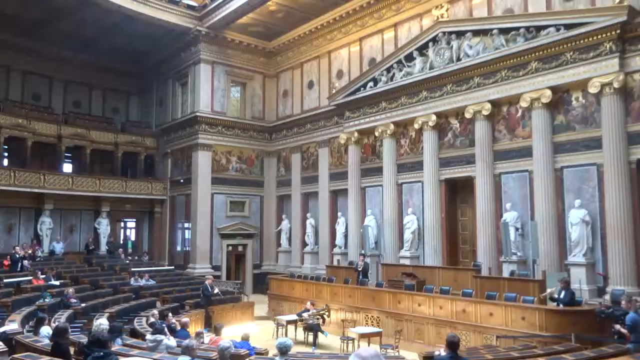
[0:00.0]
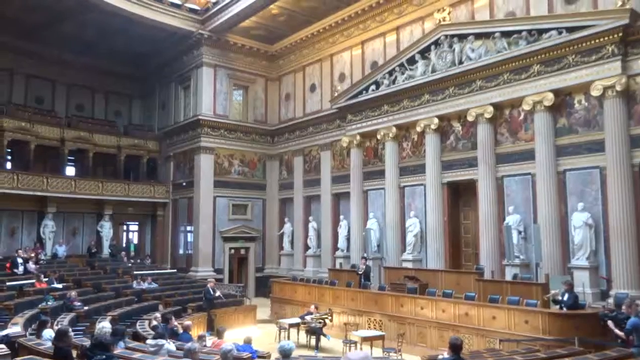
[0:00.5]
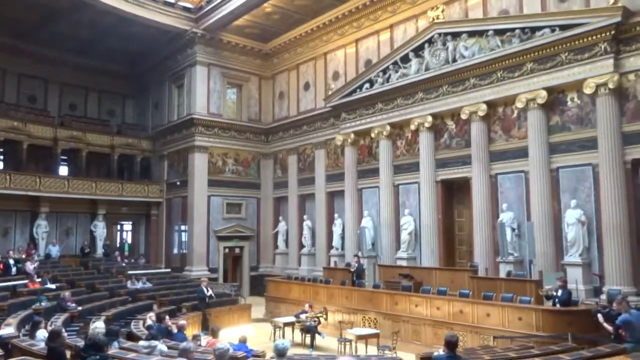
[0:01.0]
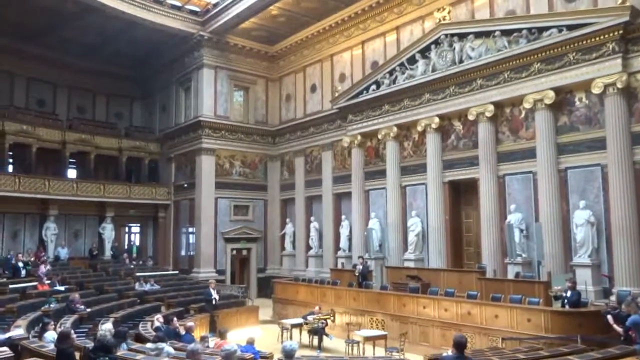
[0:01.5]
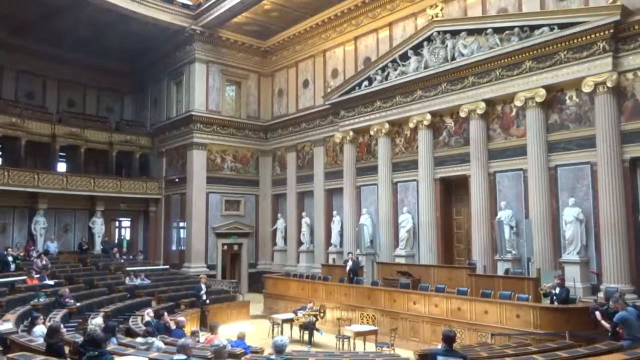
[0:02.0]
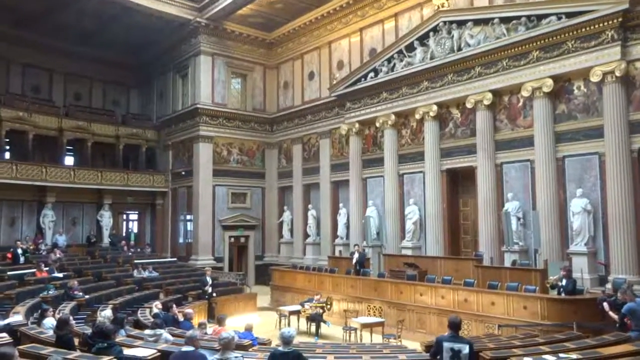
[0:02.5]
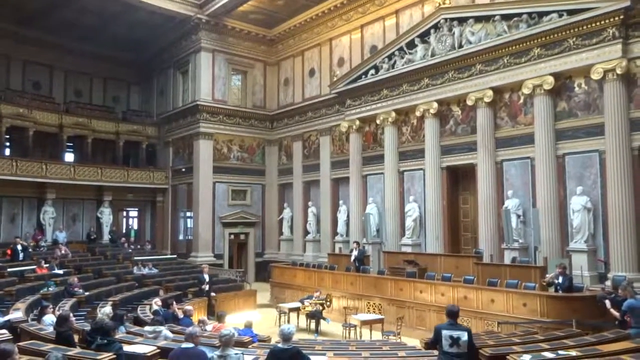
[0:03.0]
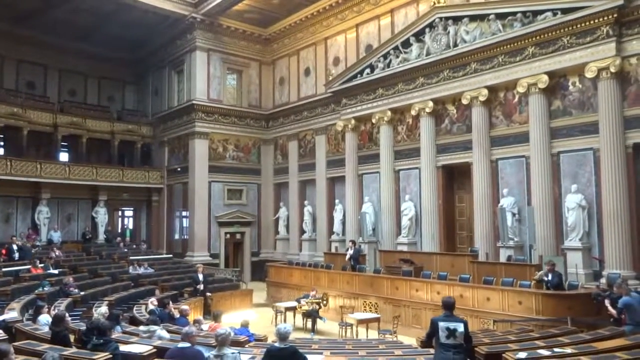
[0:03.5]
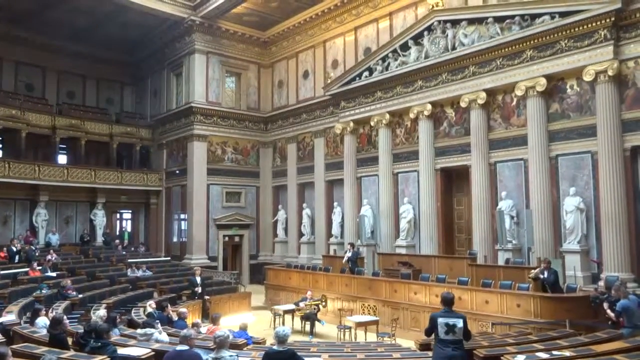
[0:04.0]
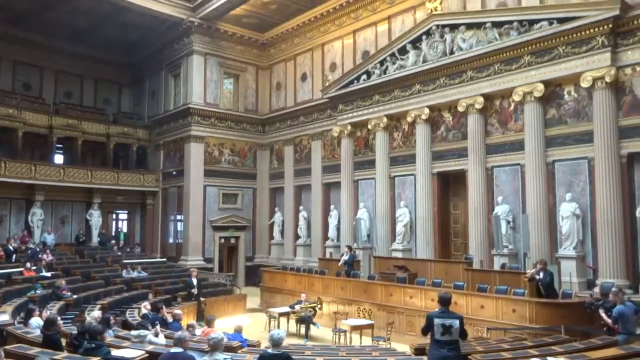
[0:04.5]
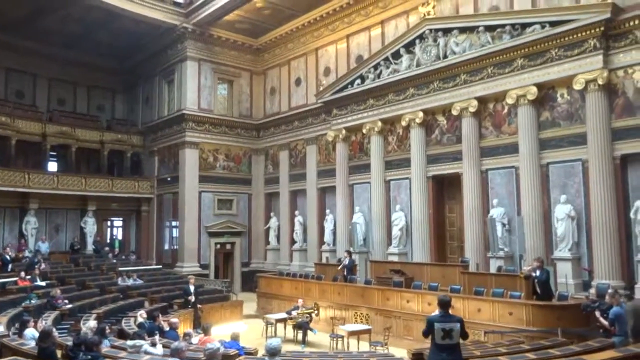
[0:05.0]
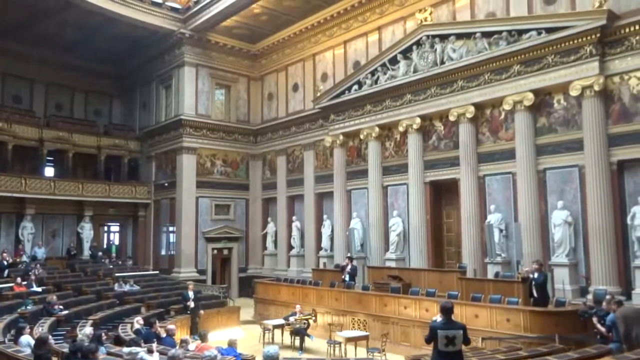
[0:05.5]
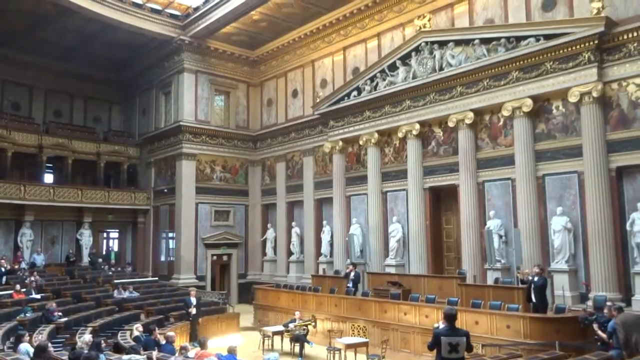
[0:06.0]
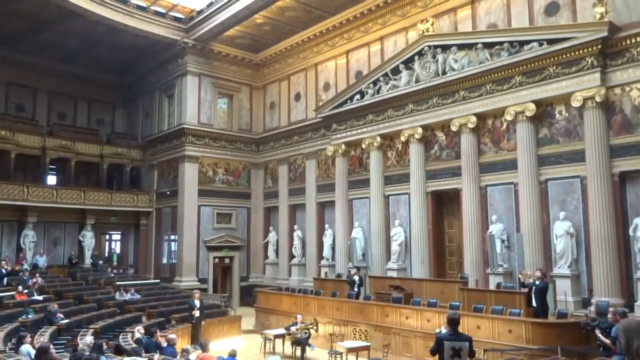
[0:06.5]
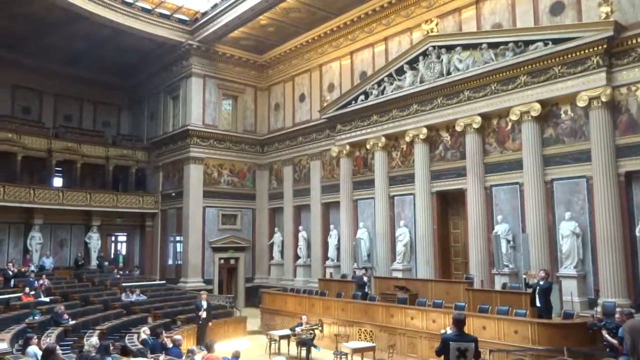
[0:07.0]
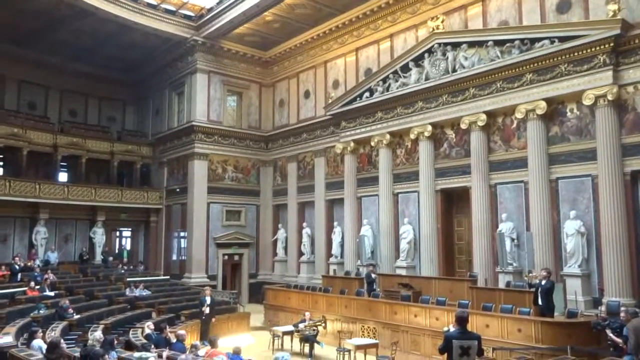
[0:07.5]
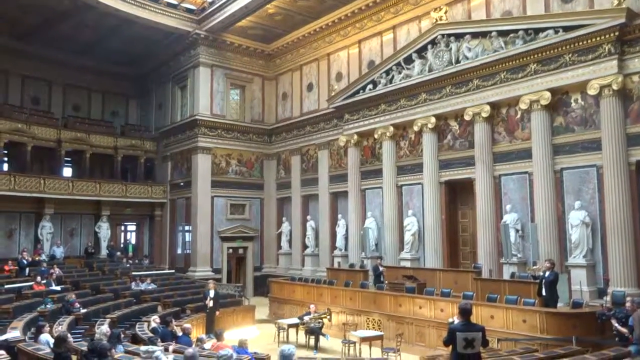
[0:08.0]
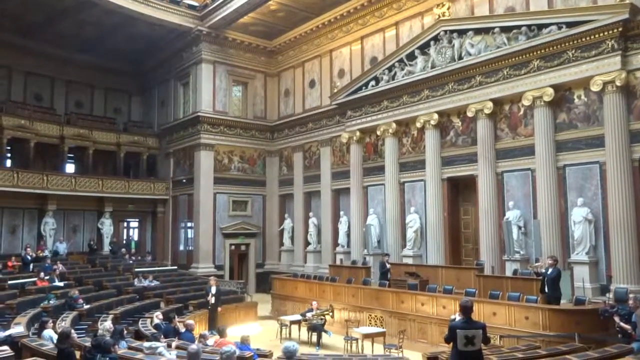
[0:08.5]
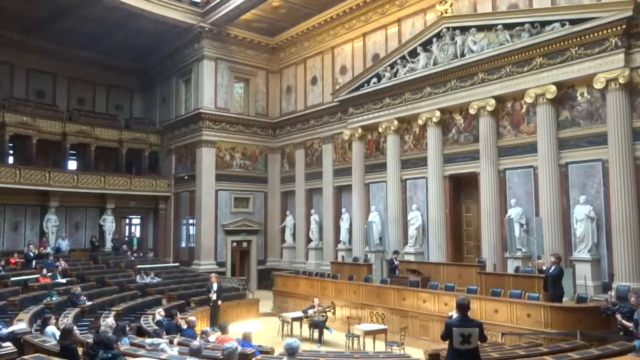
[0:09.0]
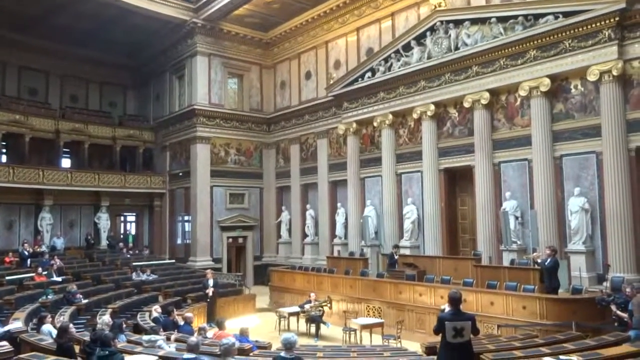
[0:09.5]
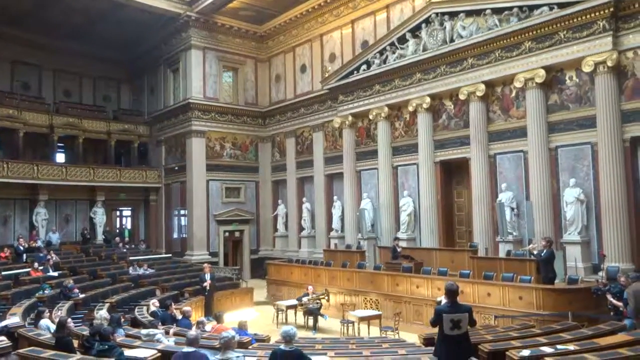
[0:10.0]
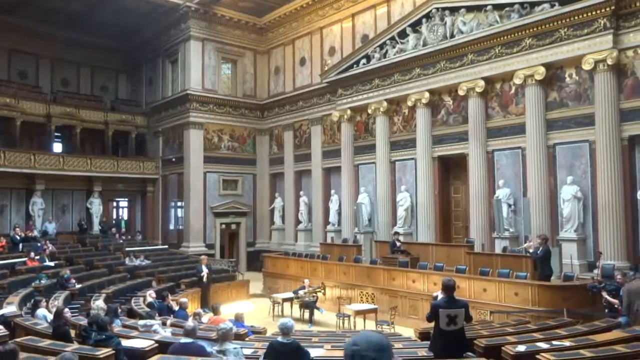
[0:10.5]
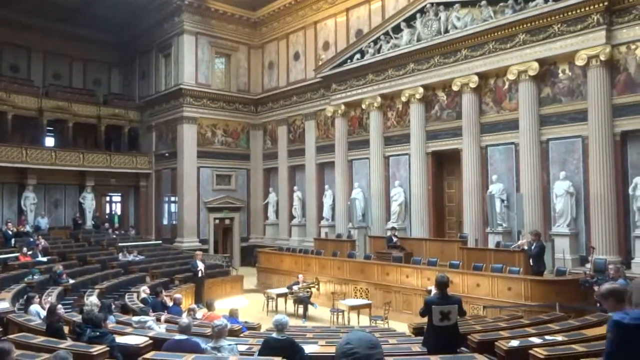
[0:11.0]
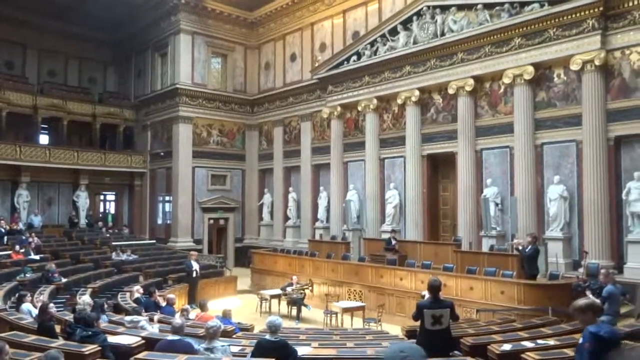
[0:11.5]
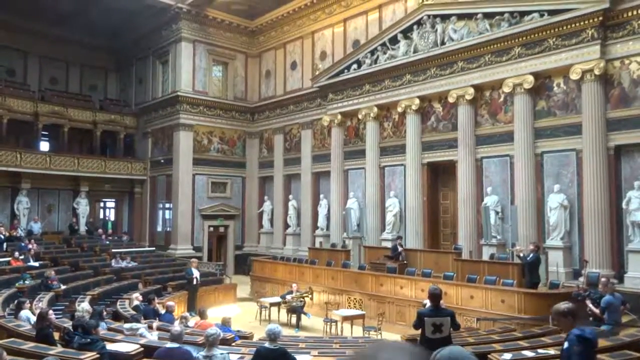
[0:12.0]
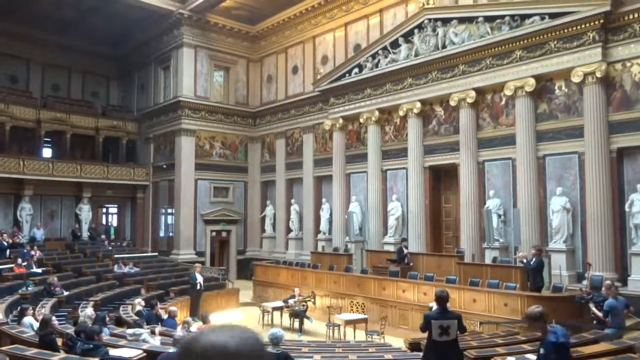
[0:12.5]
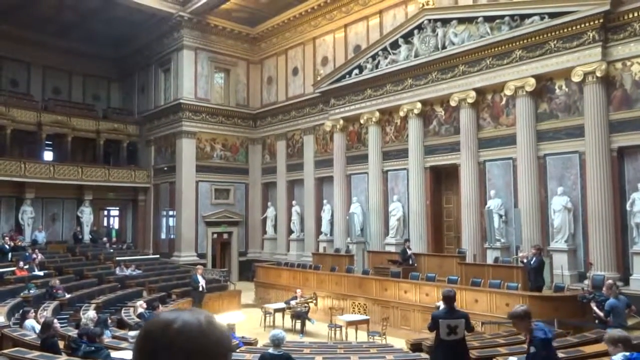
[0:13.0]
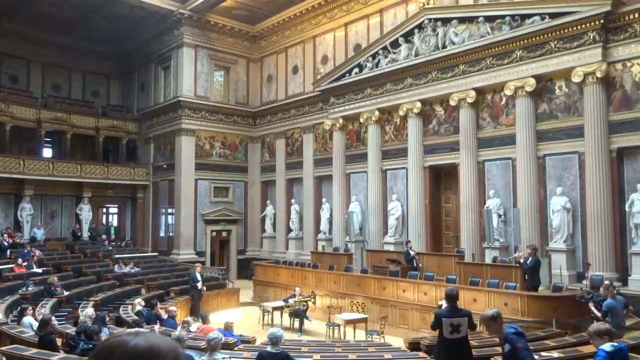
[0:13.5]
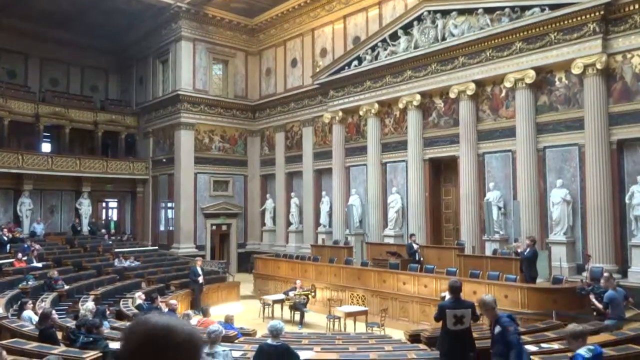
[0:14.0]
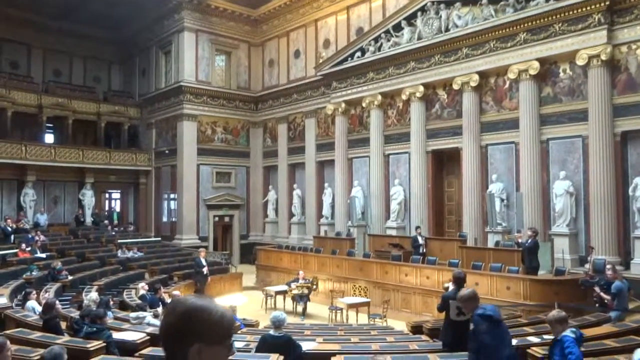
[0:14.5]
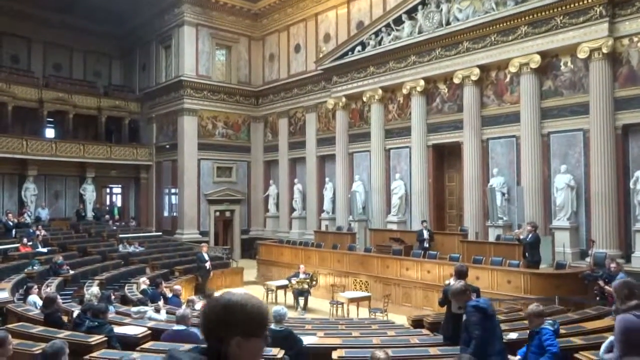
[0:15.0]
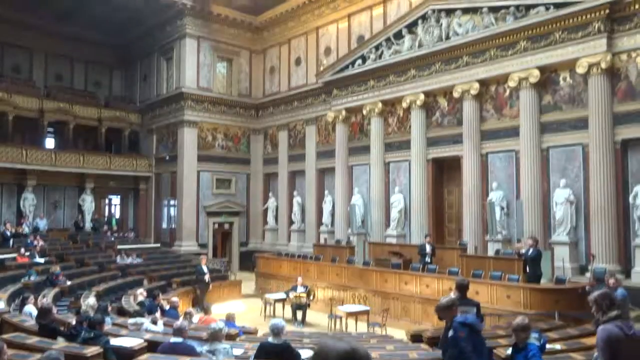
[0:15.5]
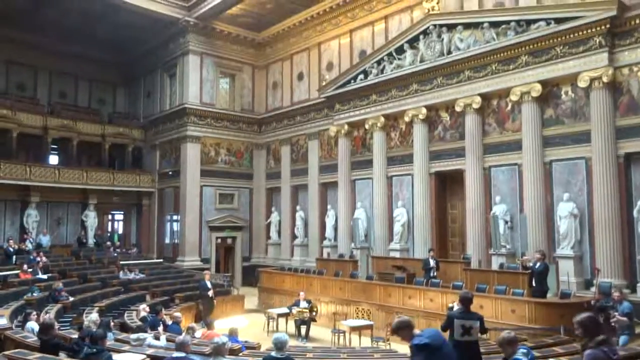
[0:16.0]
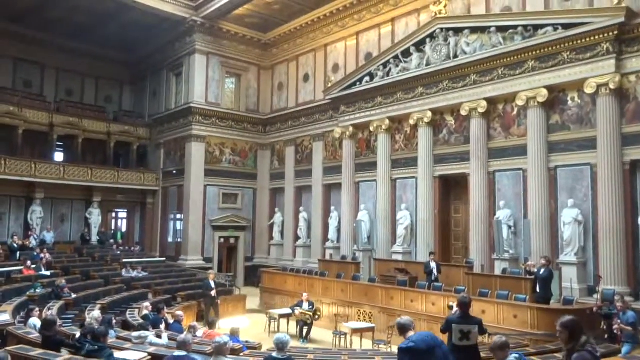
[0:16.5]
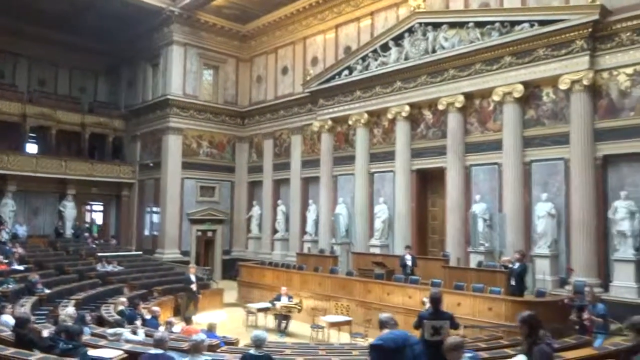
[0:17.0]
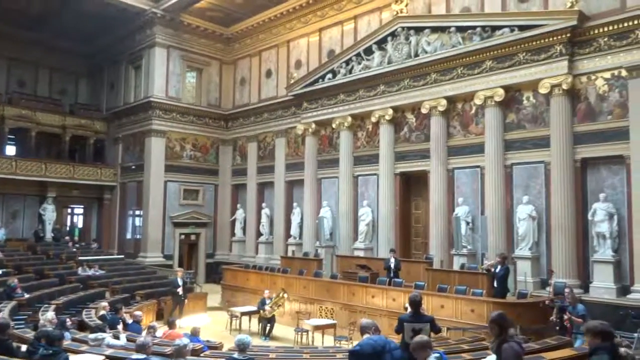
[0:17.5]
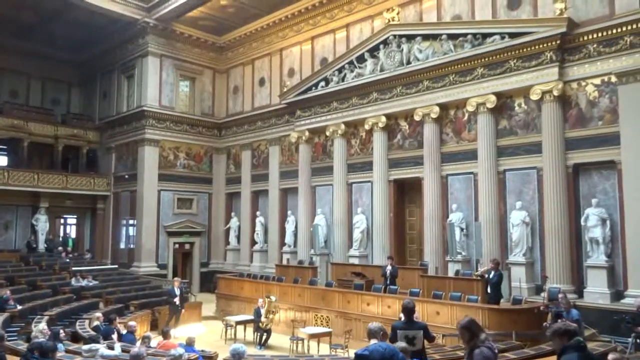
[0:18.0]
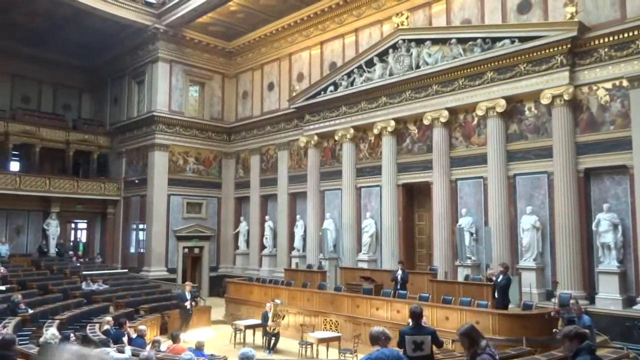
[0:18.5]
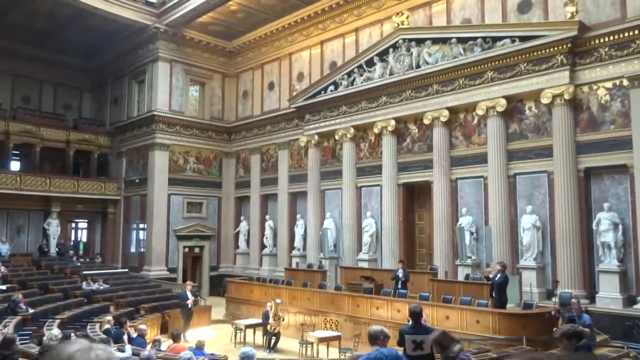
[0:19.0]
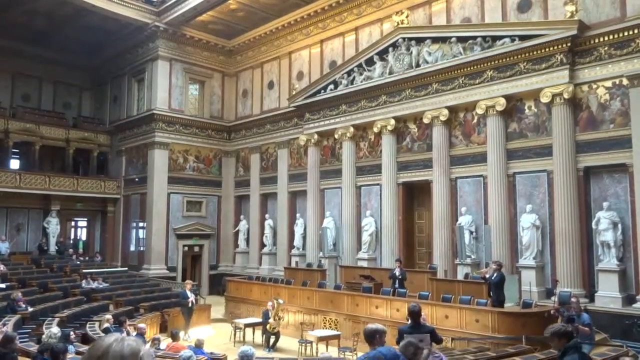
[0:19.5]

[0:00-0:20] The view is inside the Capitol building, apparently from a balcony area, looking down and to the left. Along the right wall, coming in from the right, big pillars go about halfway up the wall, with two statues between each of them, continuing to the right. Then there is a wooden door, followed by five more until about two-thirds of the way over, then a little door, a couple of windows, and another door. On the far left back wall there are two statues, with a little balcony area above them. A big wall goes all the way up to the top, probably 50 feet high, covered with all kinds of markings. In front of the door is a big podium with two smaller ones to its left and right. In front of that is another podium area with 15 chairs, and in front of that is a little speaking area with a podium pointing to the right toward the people. Behind them is a big row of bleachers about 12 deep. A few people are scattered about. The camera is a little shaky at the start. A man at the bottom toward the right side stands up, and a couple of the people up near the chairs behind the big podium stand up, one apparently playing a trumpet. A few more people file in; the man at the bottom toward the right wears a suit with a red X on the back. A couple more people file in. A person in the middle on the ground level, who is sitting down, has a big trombone.